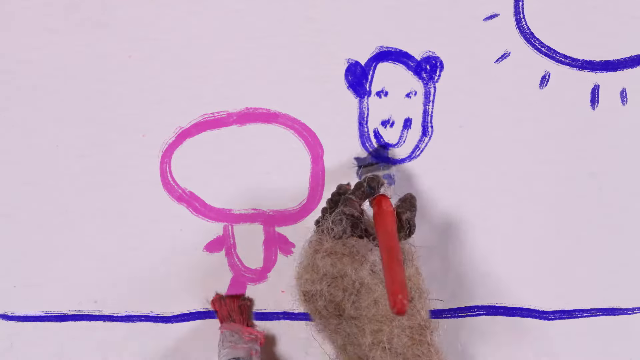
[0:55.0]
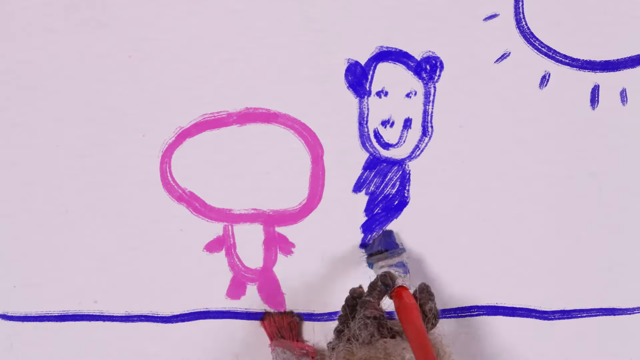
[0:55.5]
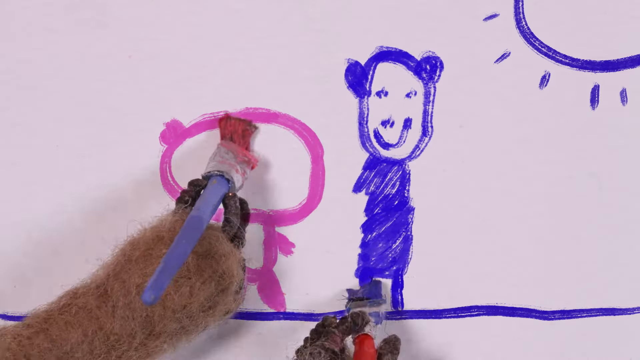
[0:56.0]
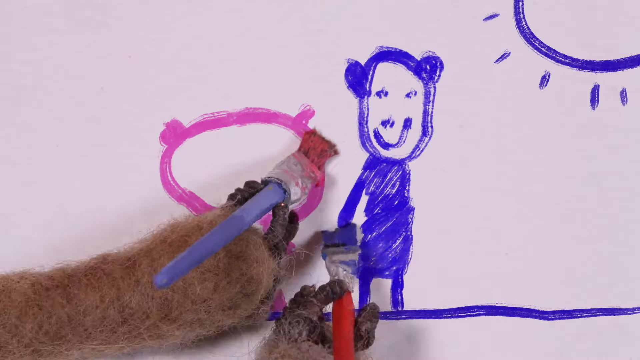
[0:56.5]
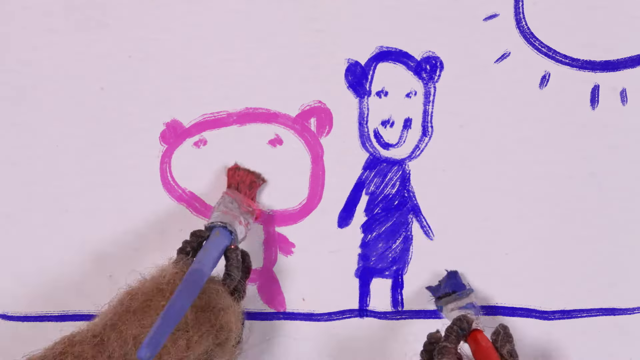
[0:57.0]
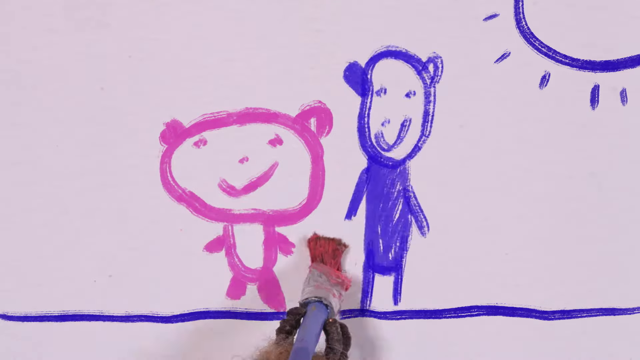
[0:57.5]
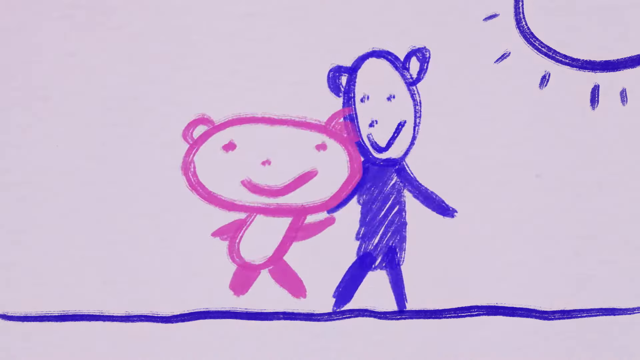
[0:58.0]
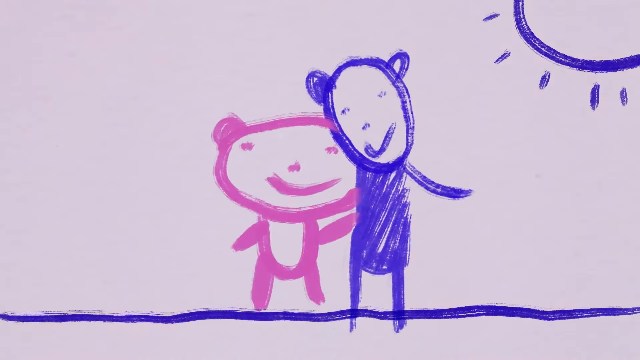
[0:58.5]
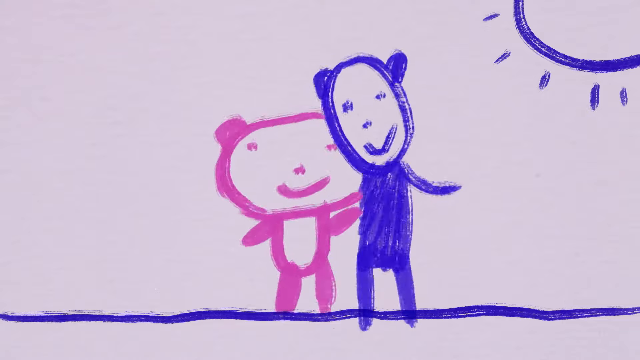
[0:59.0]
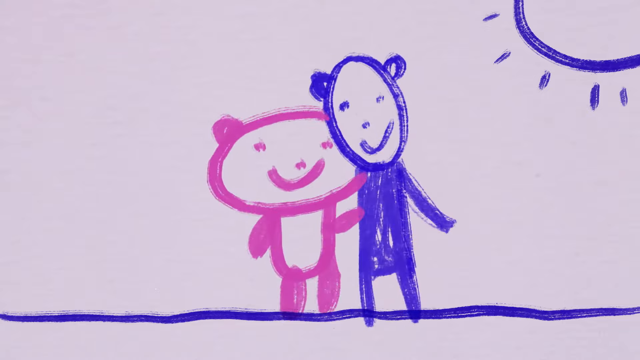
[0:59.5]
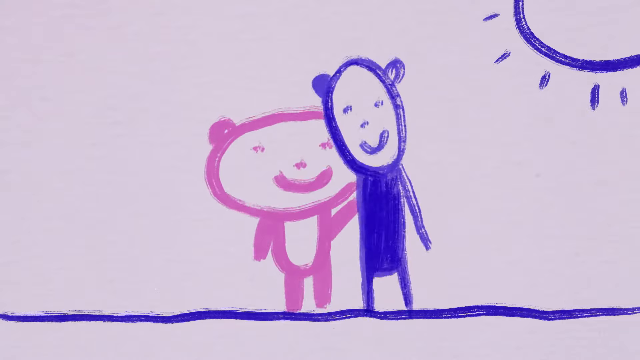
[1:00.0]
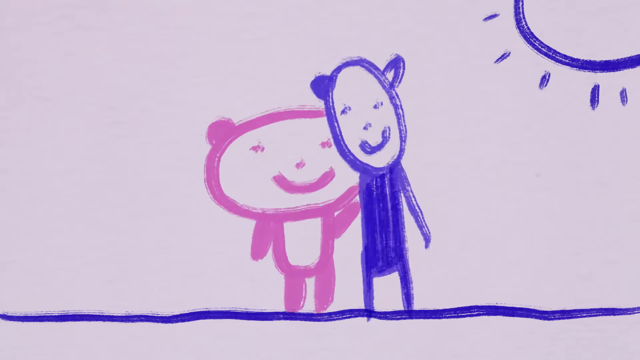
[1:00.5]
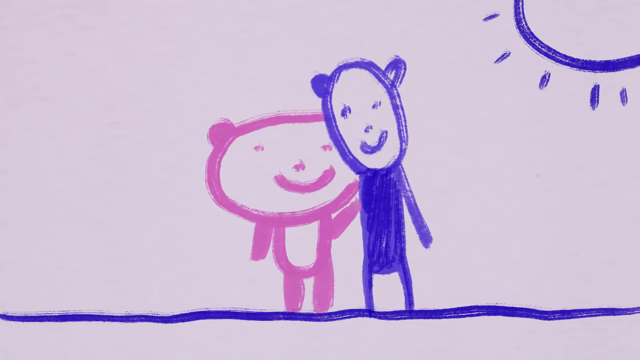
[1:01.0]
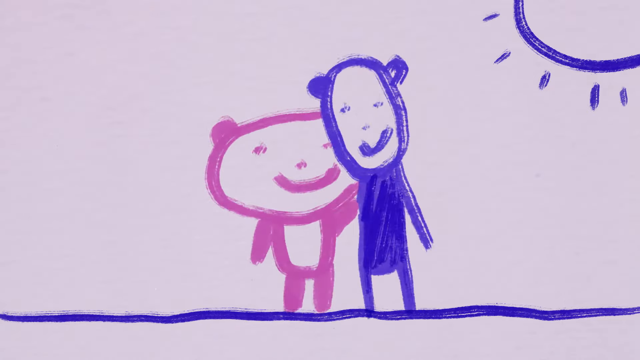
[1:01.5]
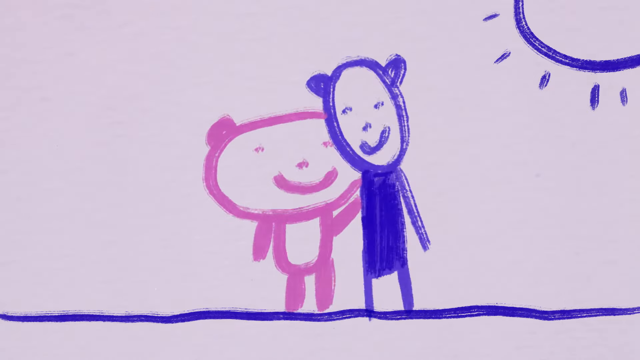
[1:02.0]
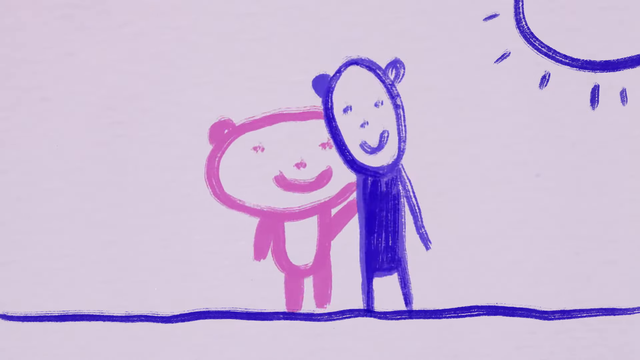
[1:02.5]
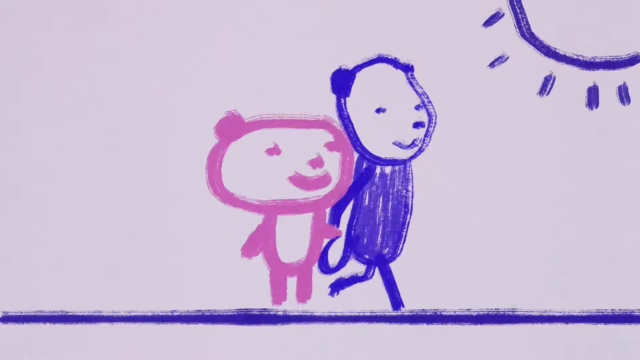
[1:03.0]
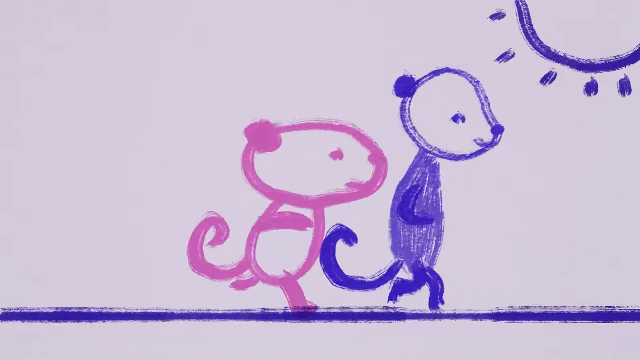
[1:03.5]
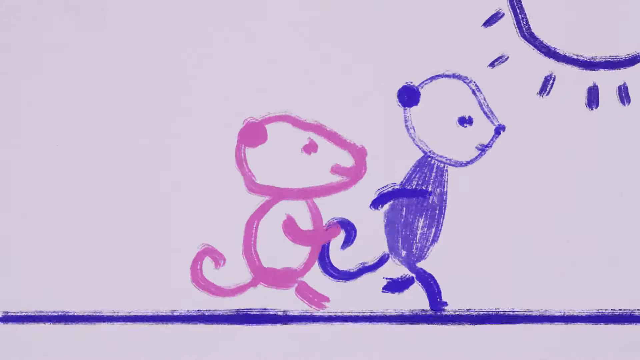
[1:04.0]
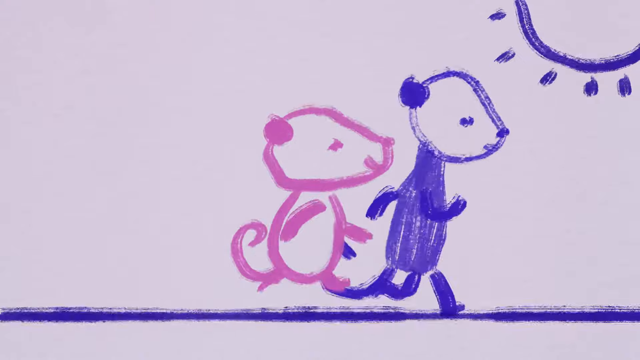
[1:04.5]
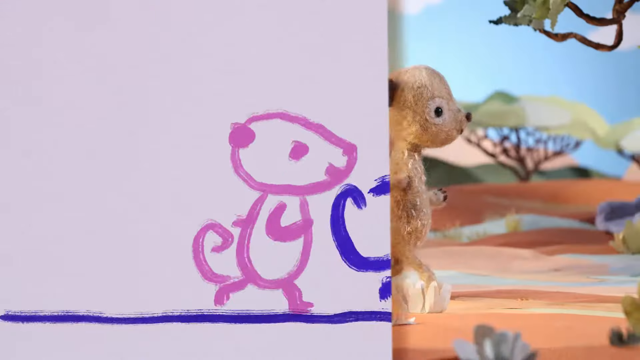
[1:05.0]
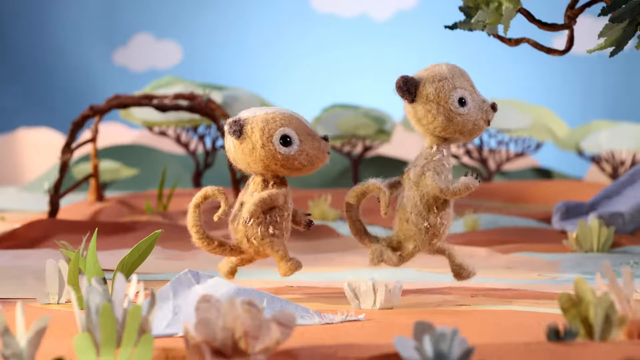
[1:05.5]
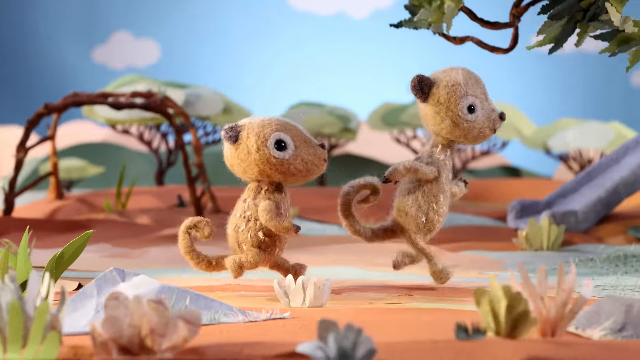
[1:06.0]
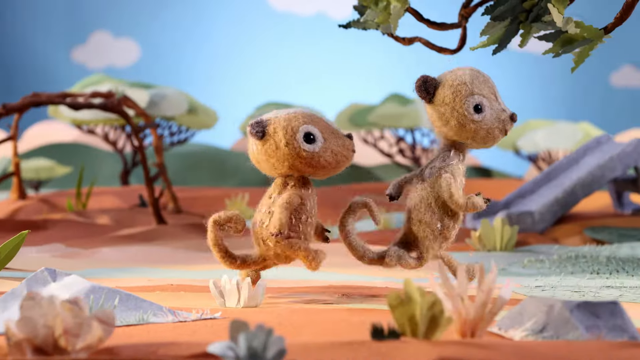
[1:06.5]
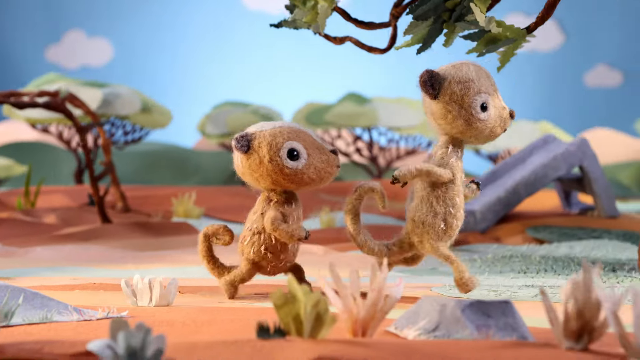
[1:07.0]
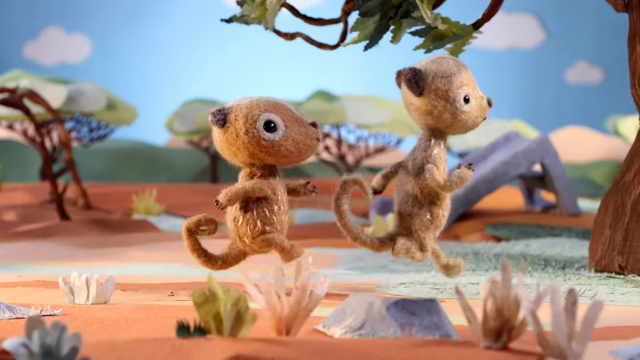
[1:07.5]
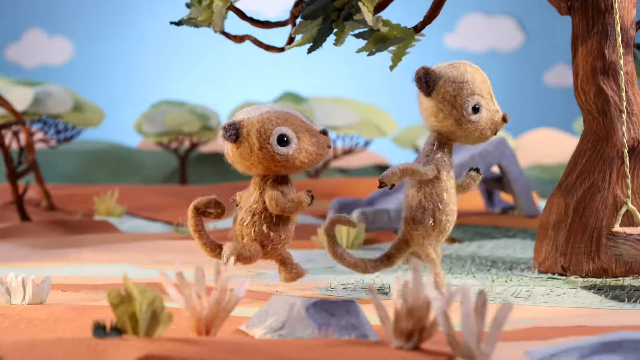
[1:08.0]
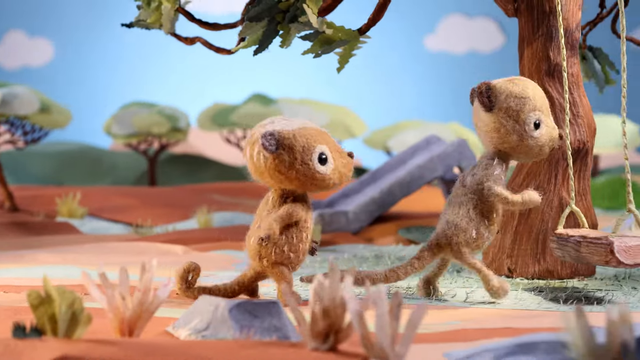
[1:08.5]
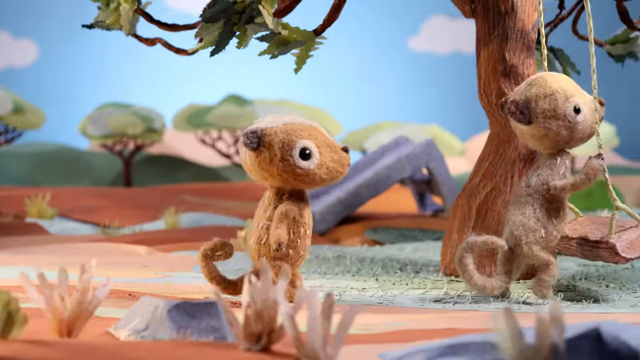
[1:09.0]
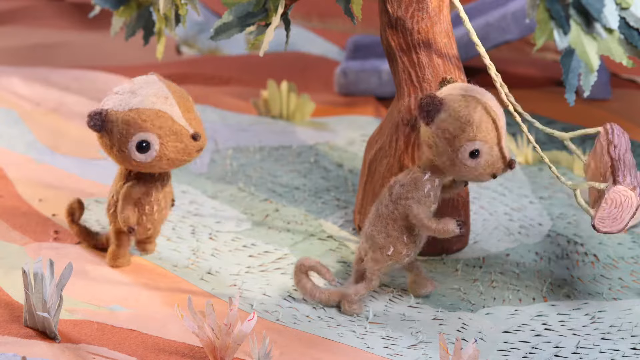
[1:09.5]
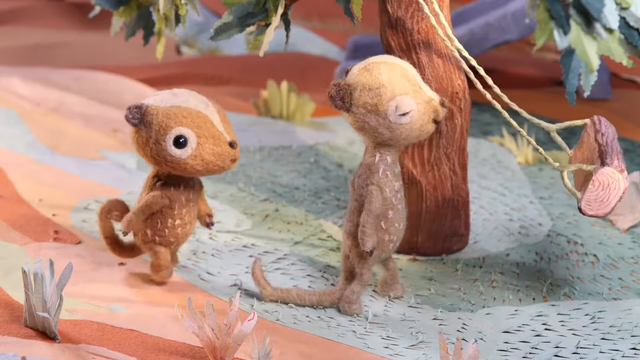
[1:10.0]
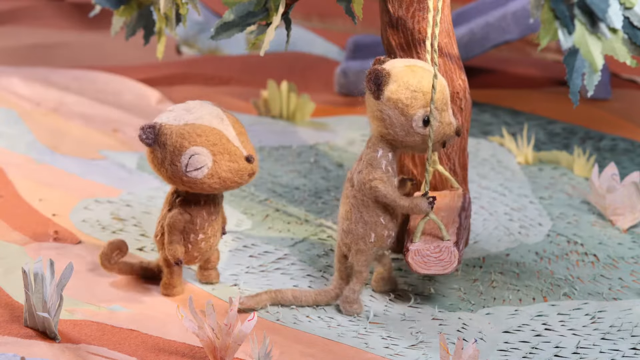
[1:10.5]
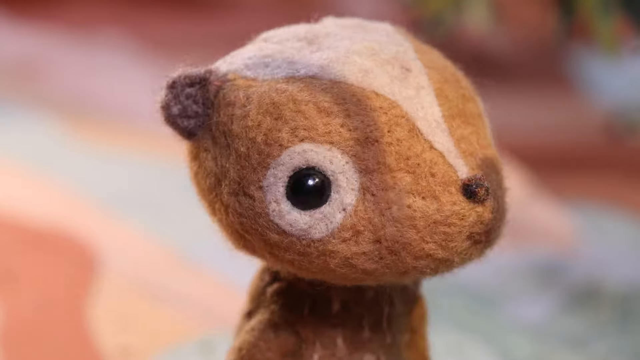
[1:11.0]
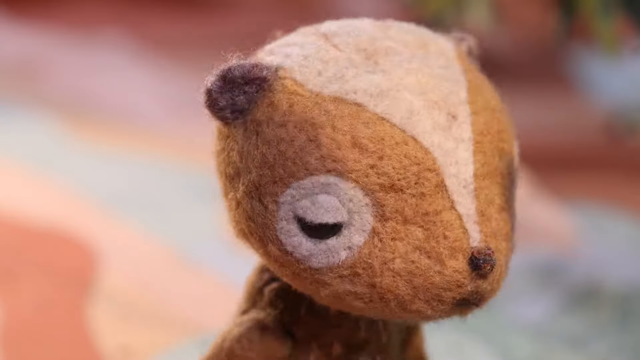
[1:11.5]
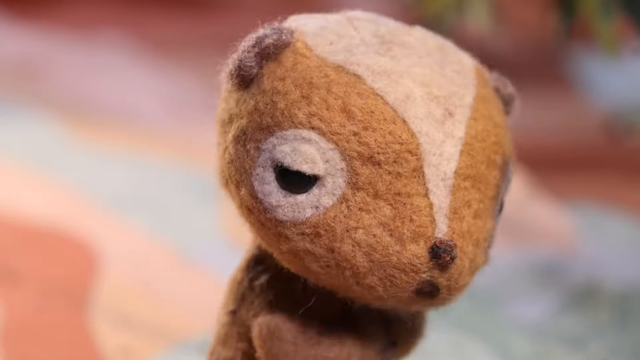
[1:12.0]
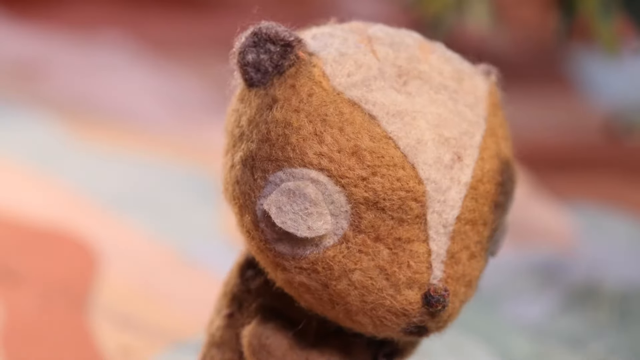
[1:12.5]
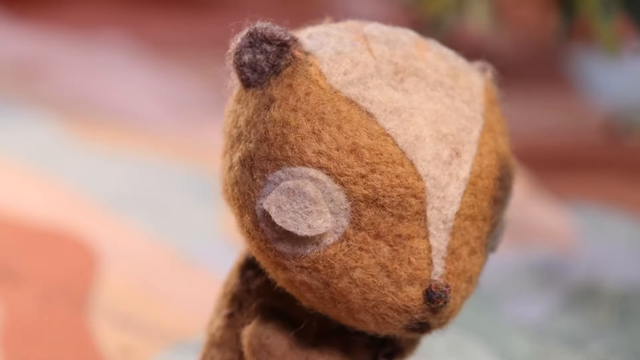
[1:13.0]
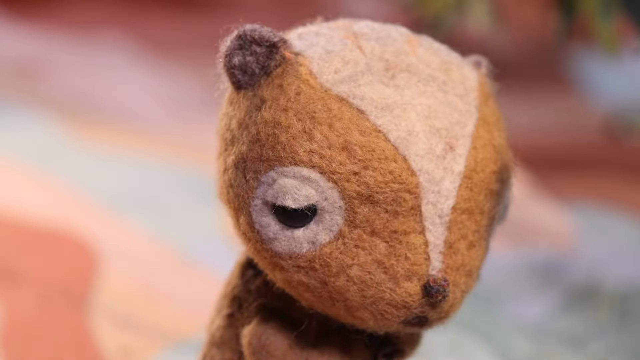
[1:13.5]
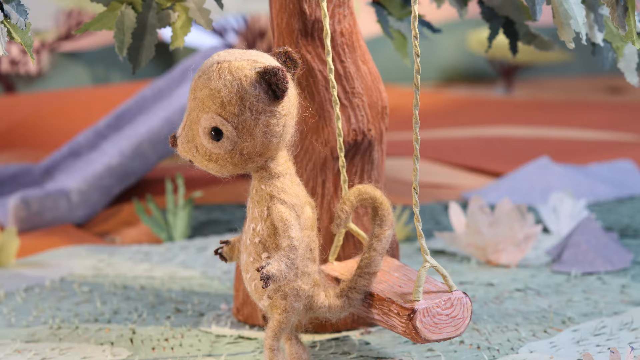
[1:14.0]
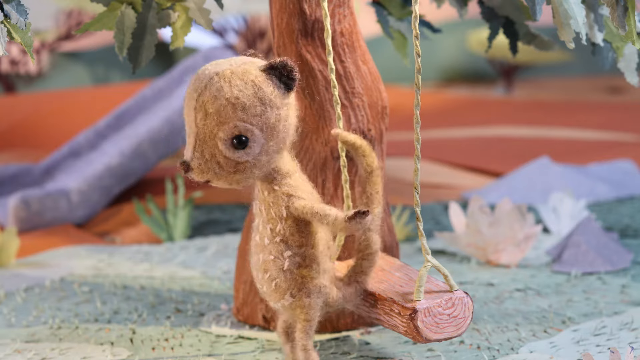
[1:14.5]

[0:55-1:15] A painting is being made in blue and pink paint. In the upper right is a sun made of blue paint, below it a happy-faced creature in blue paint, and to its left a pink creature that also has a happy face. The two painted creatures move together, hug and smile at one another, then run to the right; as they do, they come off the paper and turn into animated creatures that look like chipmunks, the one in front taller than the one behind. Behind them are some small trees, a slide and a small gym set. They hop to the right to a swing attached to a tree and push it. A close-up shows the smaller chipmunk, and then the larger chipmunk sits on the swing.